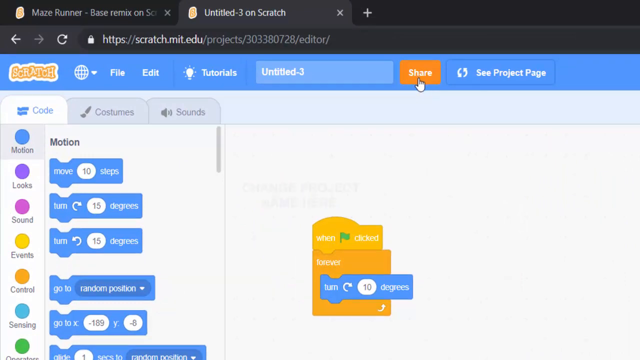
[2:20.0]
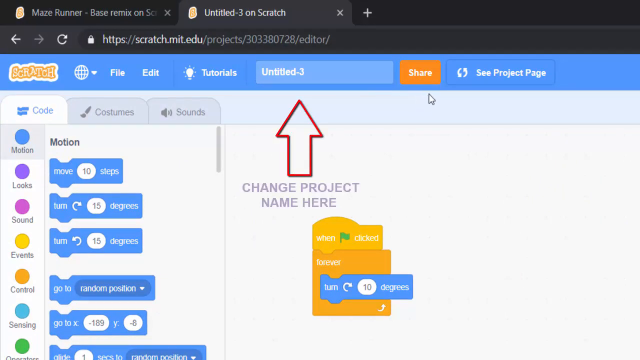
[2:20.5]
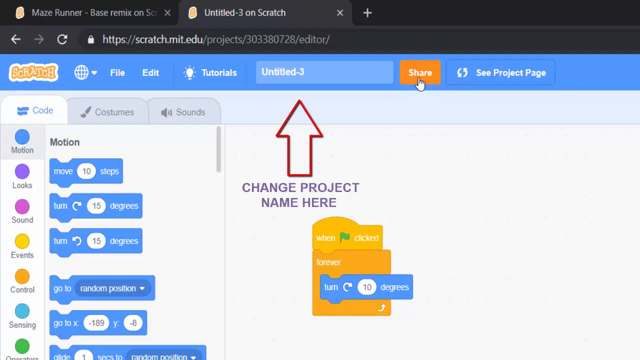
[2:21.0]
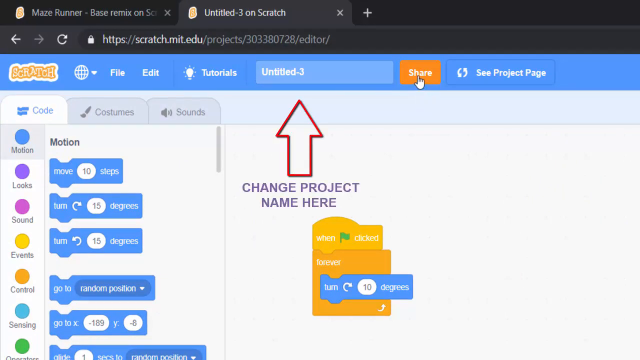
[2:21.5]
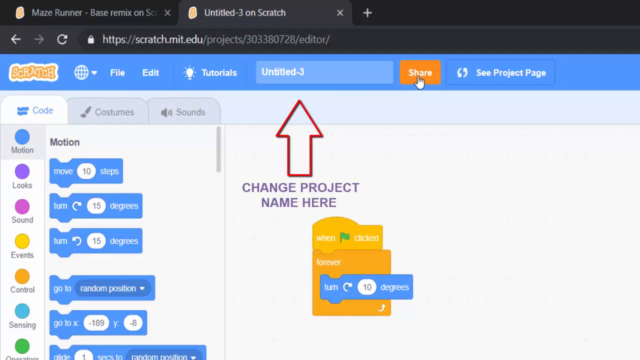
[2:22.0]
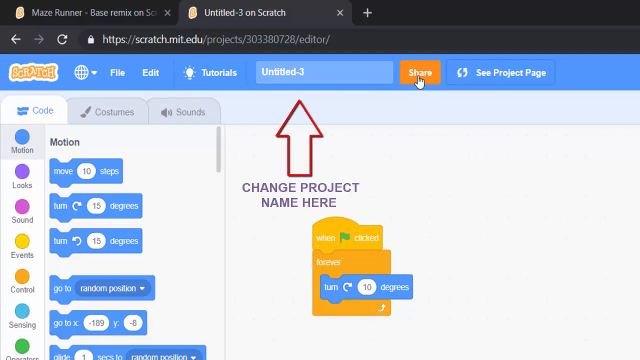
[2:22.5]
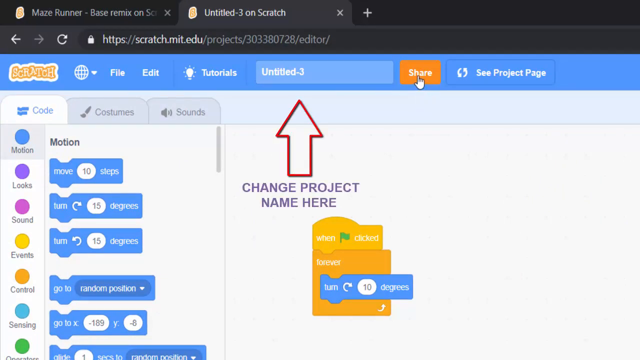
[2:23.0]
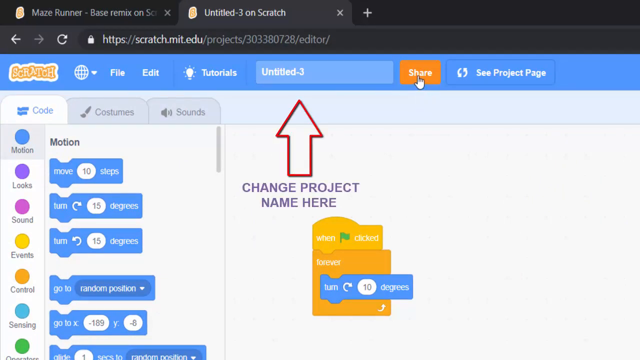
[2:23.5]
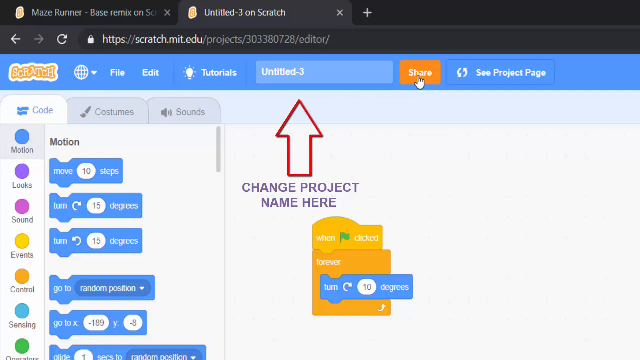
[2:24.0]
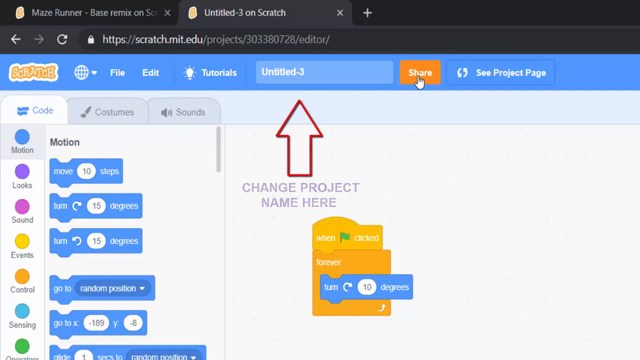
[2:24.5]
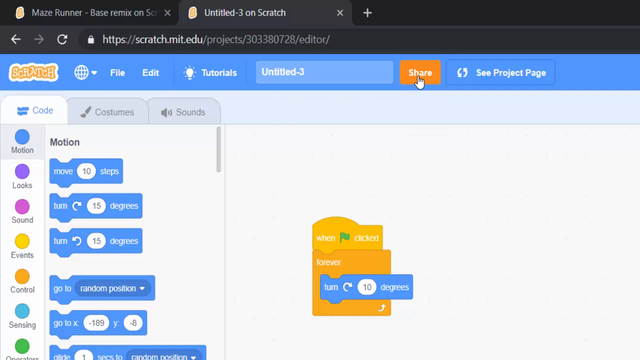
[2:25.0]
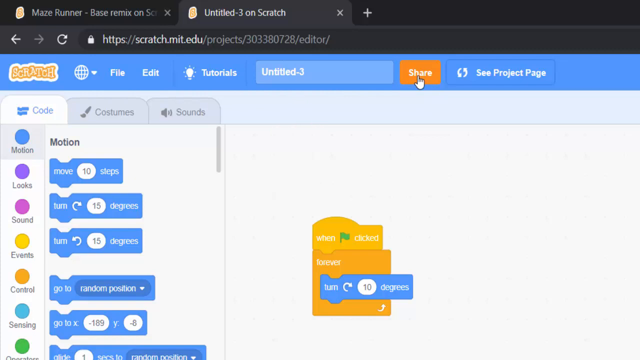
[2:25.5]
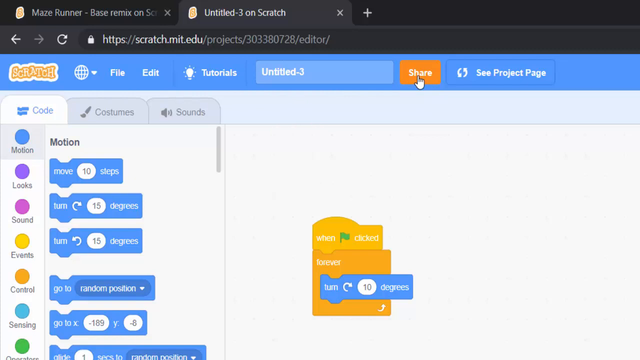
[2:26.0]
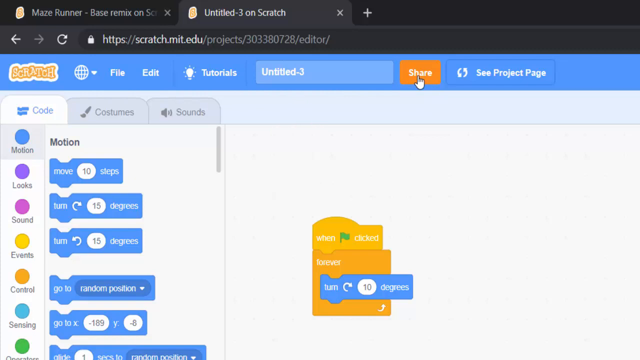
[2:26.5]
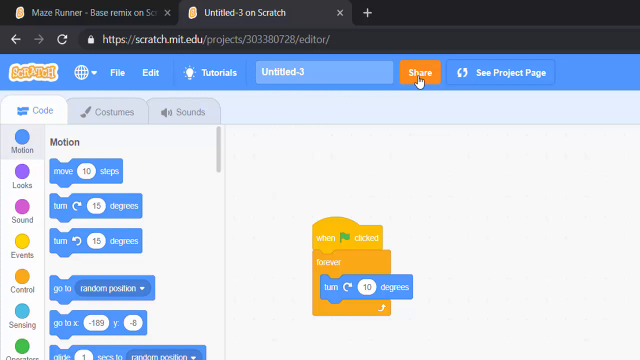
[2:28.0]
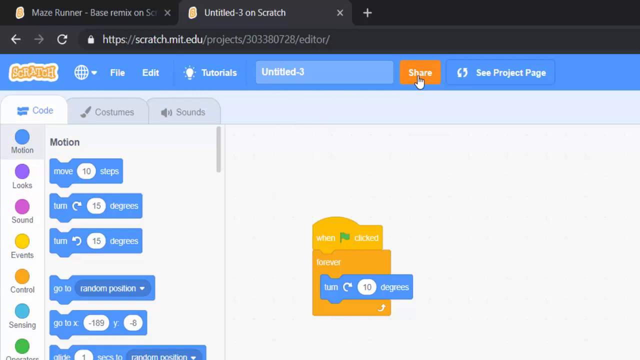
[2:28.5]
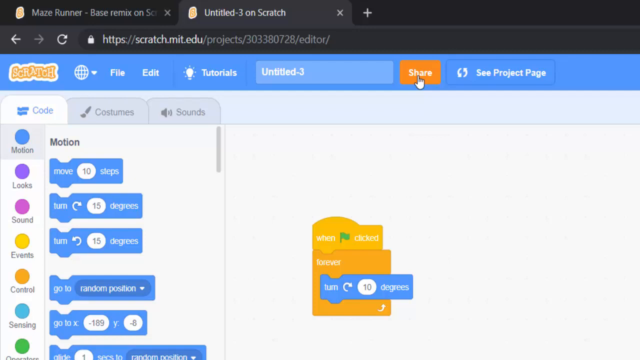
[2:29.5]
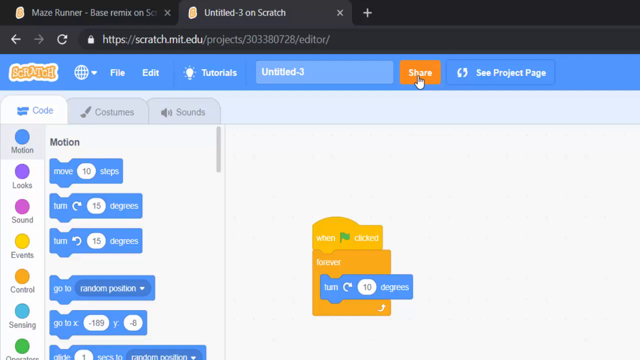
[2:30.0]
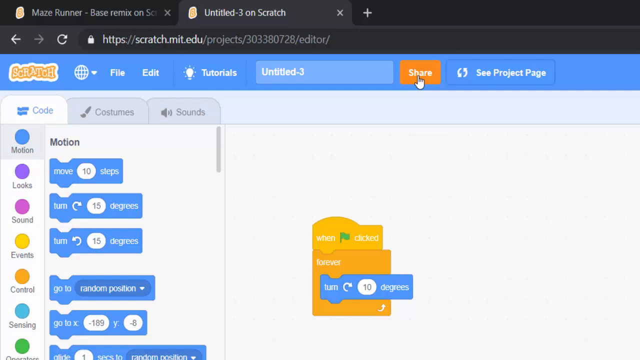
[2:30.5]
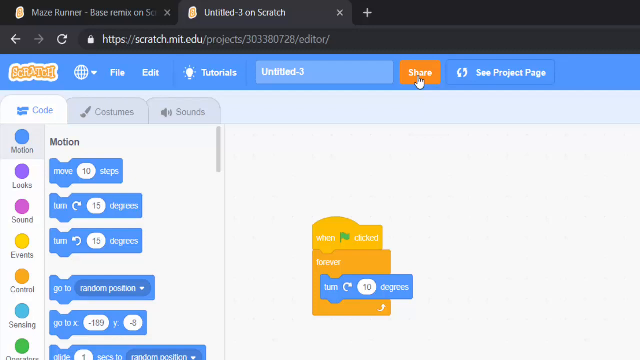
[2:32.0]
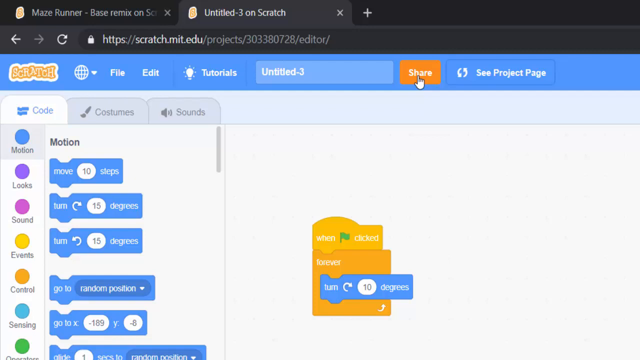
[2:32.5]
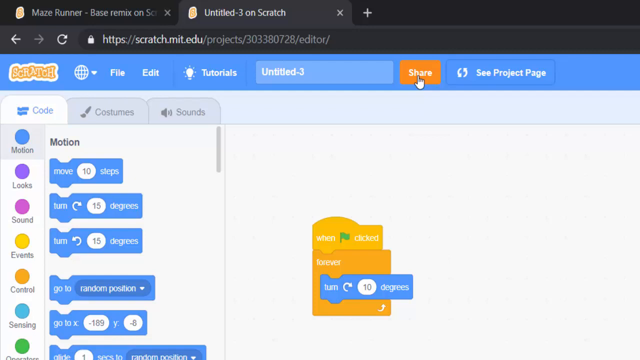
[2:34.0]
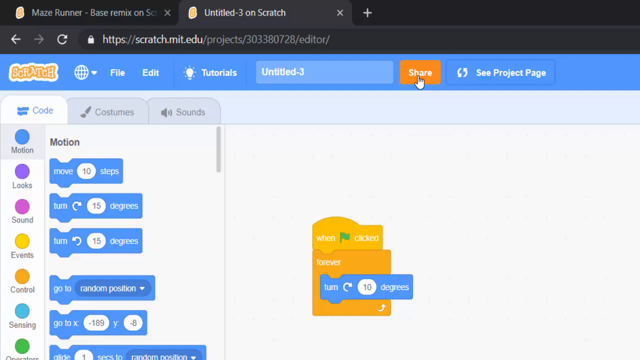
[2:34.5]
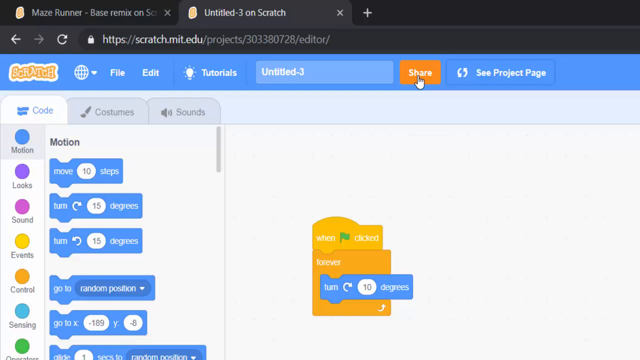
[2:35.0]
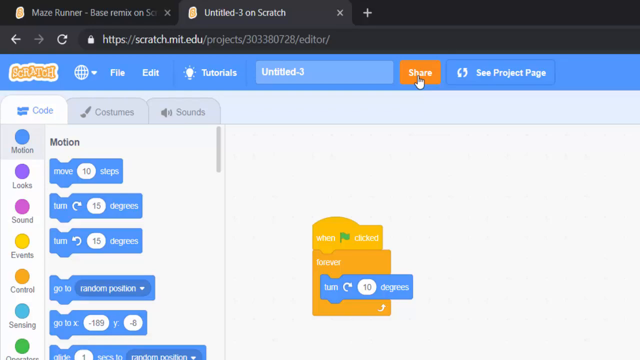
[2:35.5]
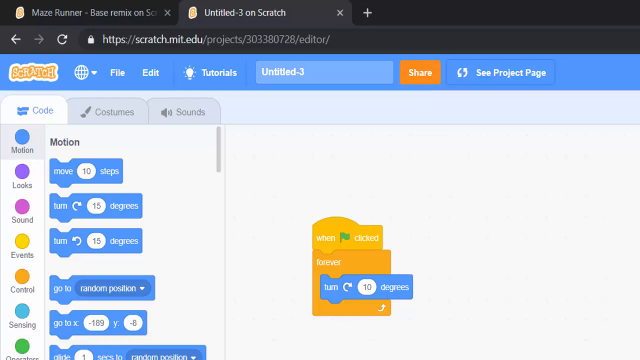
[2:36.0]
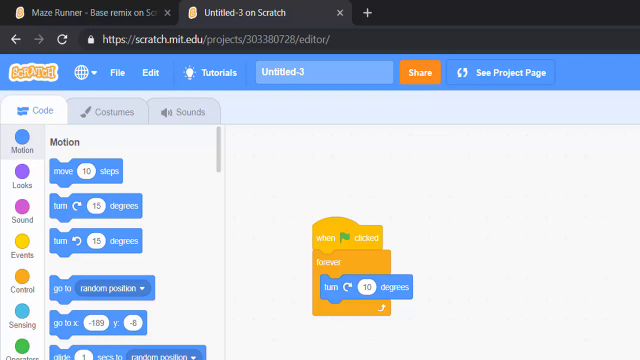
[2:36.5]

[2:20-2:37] On the coding page of the website, the top left portion is slightly zoomed in, and the mouse hovers over the orange share button in the top header of the screen. A red arrow fades in and moves onto the middle of the screen, pointing to the project name, Untitled-3, and text appears under it reading "change project name here" in all caps and gray text. The arrow then fades away. The rest of the video stays on this page, zoomed in to the top left of the coding area of the project. To the left is a panel for adding coding blocks, and to the right is a relatively empty workspace that just shows a start function and a loop function. There are two tabs at the top of the screen.